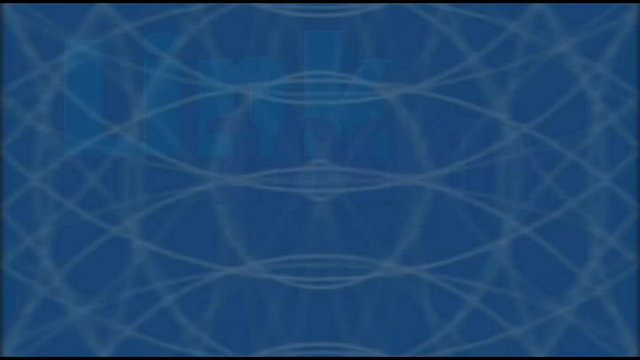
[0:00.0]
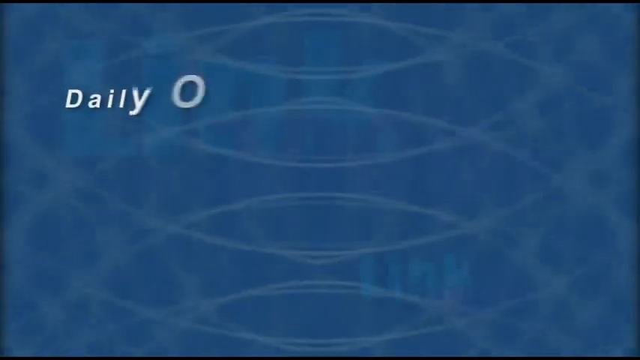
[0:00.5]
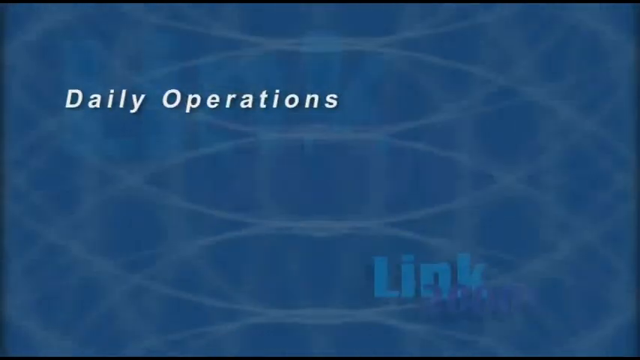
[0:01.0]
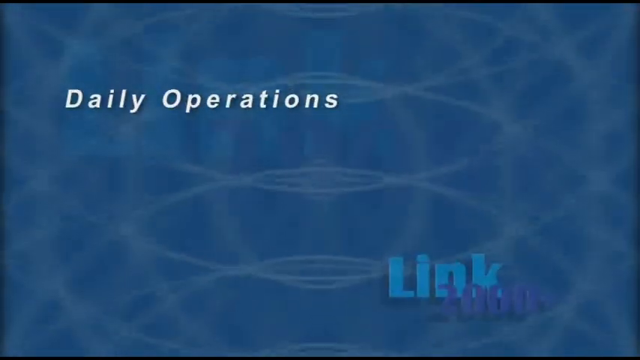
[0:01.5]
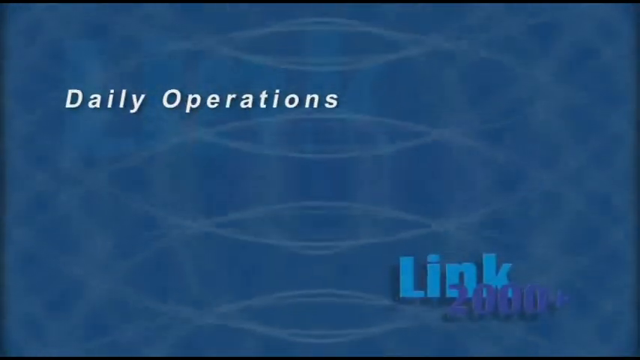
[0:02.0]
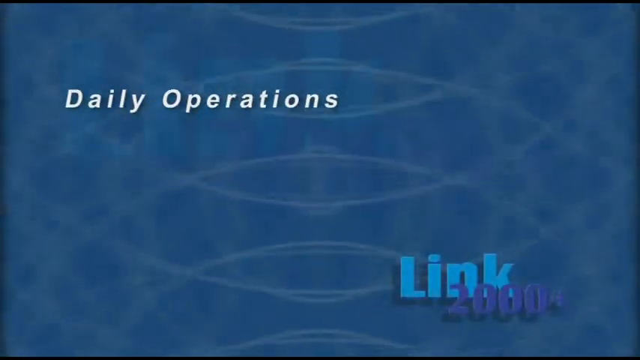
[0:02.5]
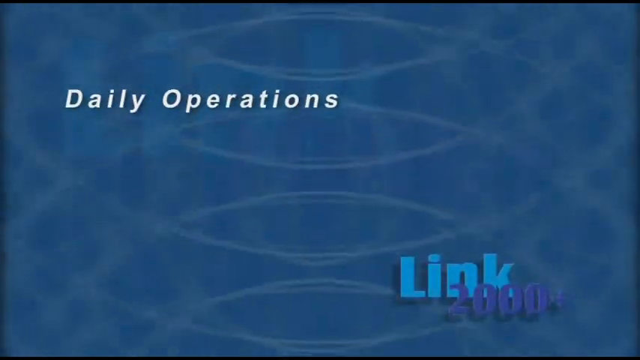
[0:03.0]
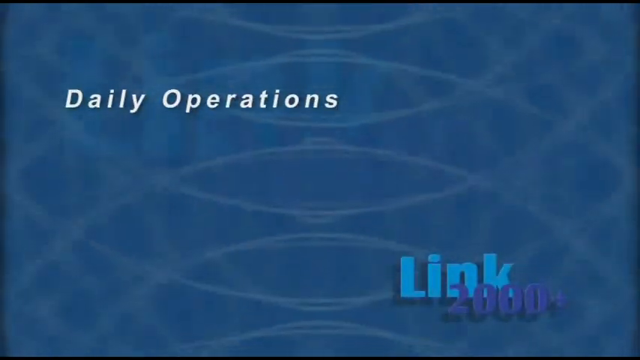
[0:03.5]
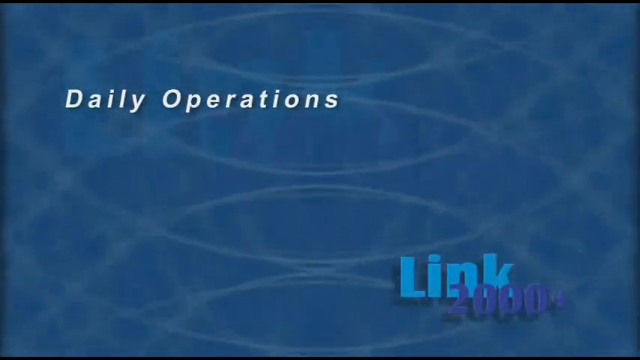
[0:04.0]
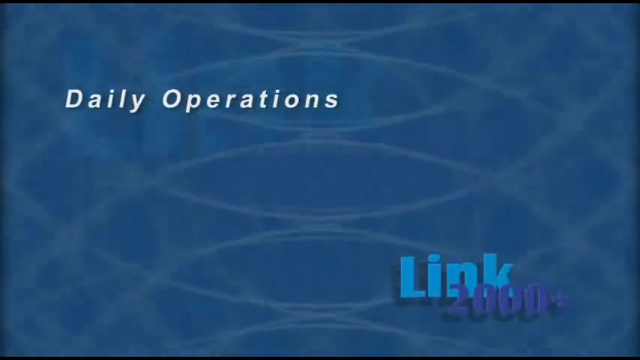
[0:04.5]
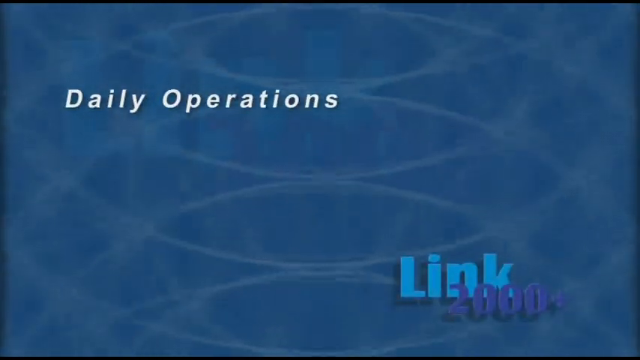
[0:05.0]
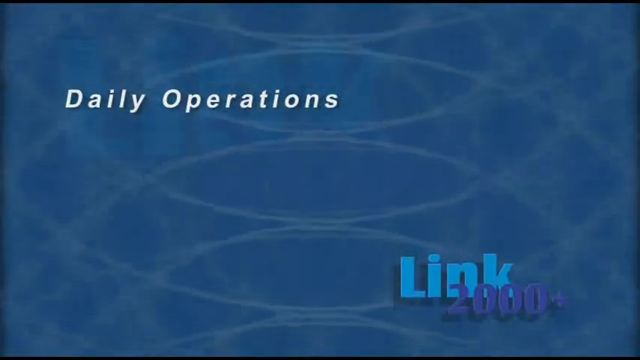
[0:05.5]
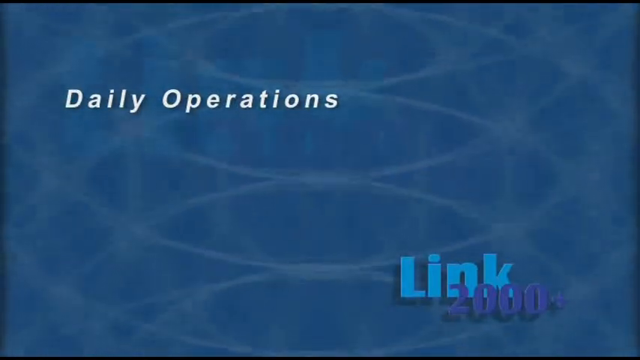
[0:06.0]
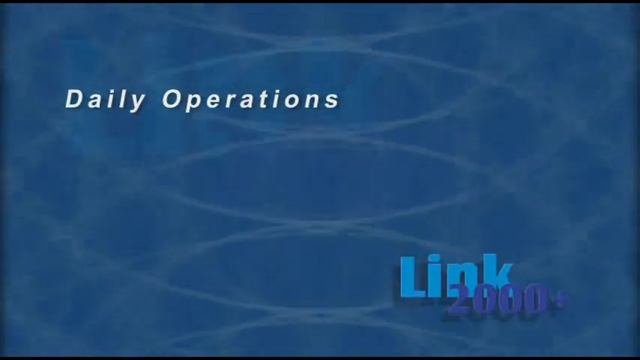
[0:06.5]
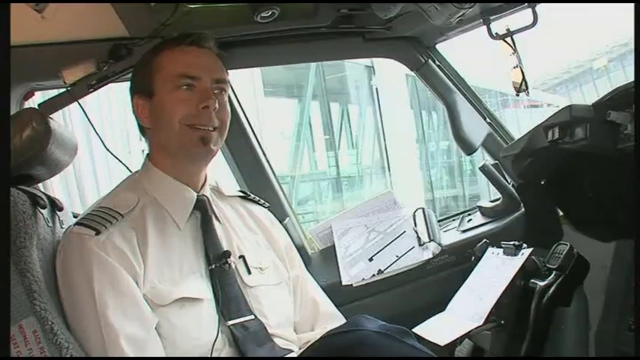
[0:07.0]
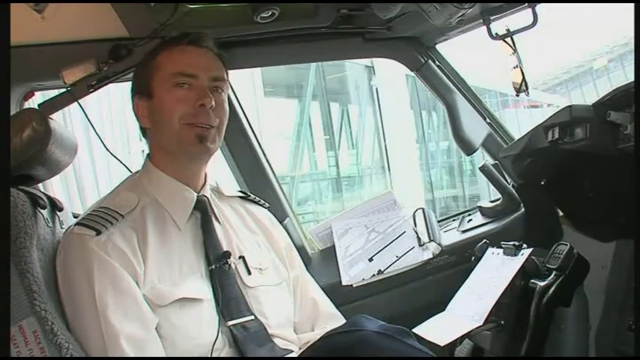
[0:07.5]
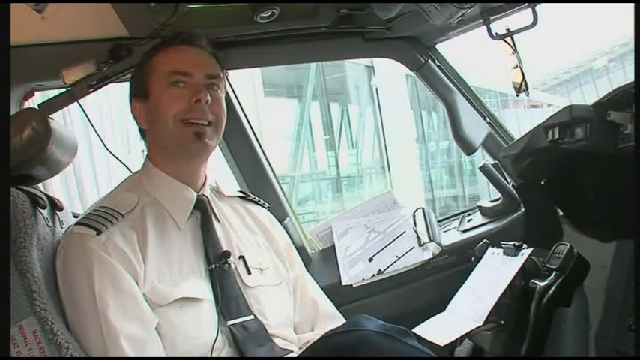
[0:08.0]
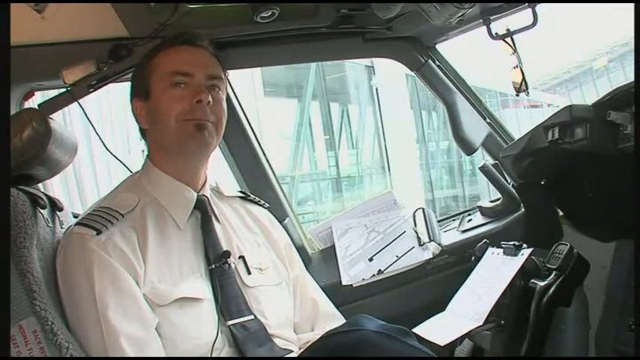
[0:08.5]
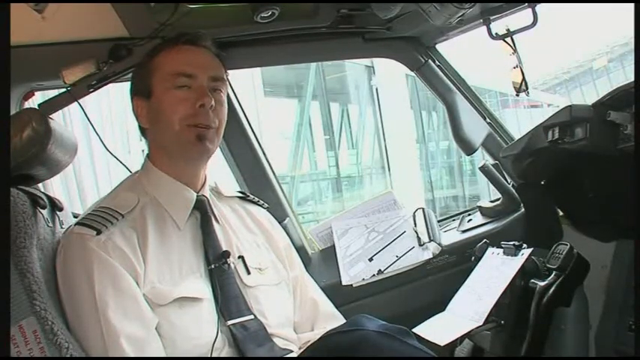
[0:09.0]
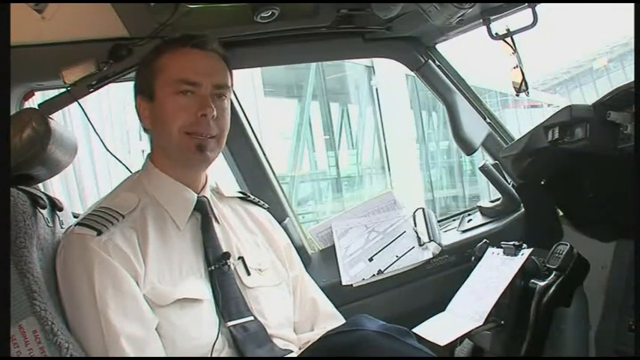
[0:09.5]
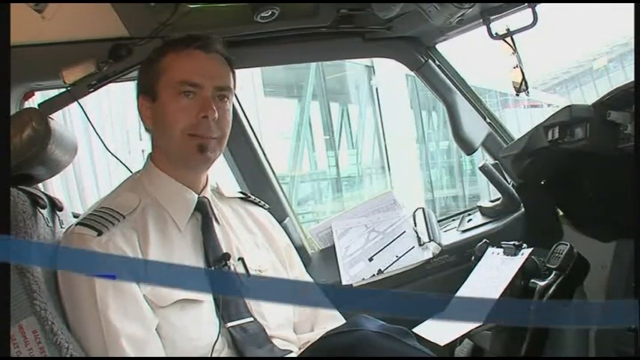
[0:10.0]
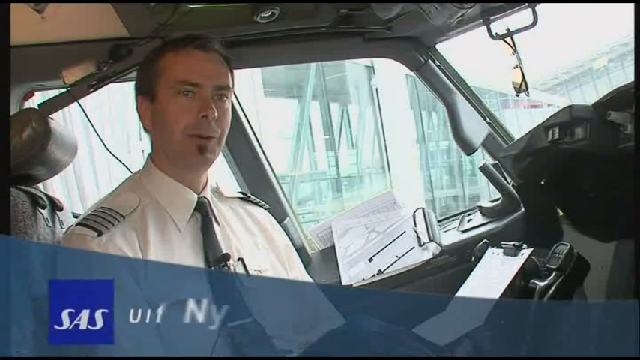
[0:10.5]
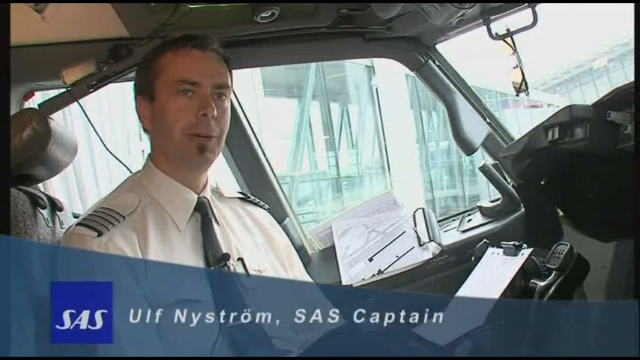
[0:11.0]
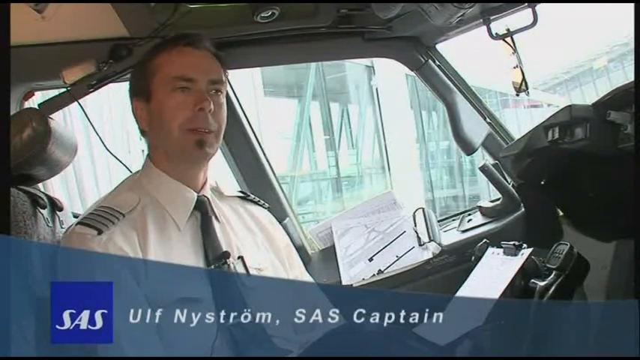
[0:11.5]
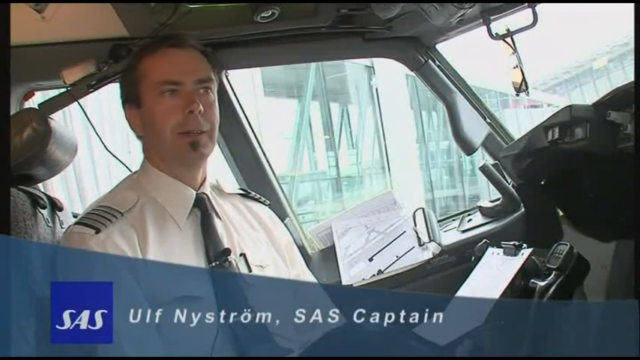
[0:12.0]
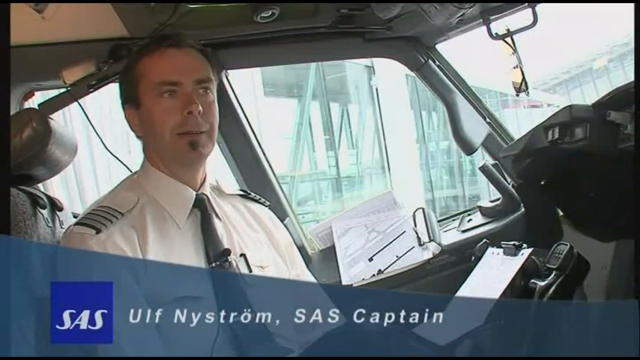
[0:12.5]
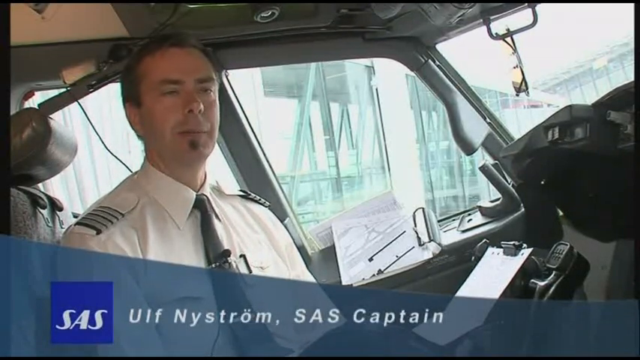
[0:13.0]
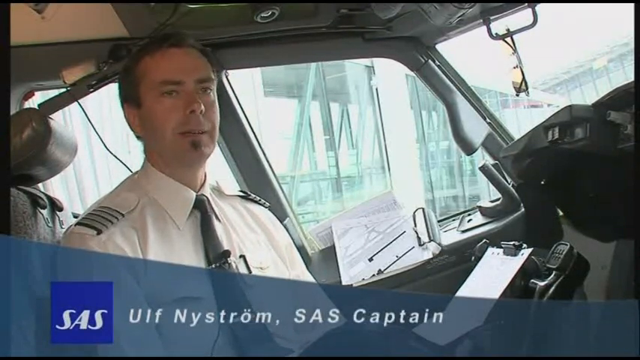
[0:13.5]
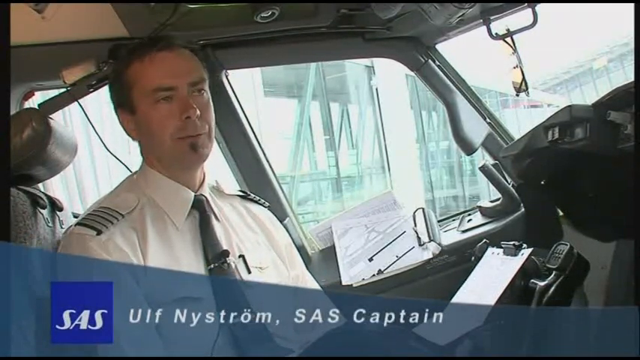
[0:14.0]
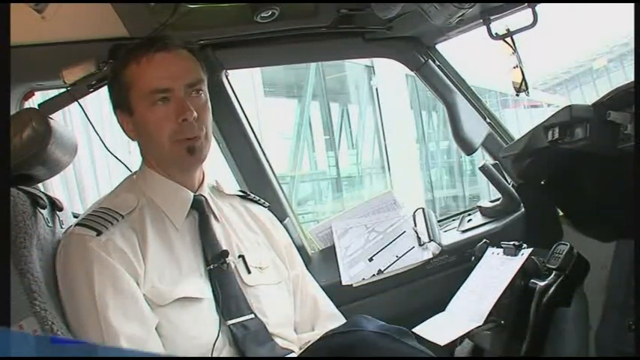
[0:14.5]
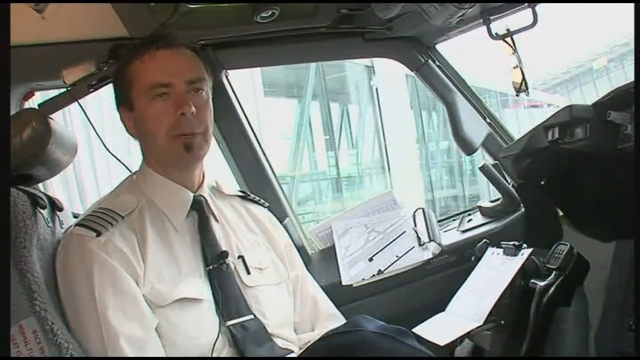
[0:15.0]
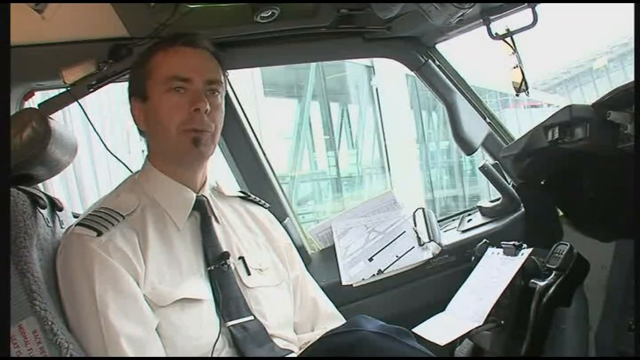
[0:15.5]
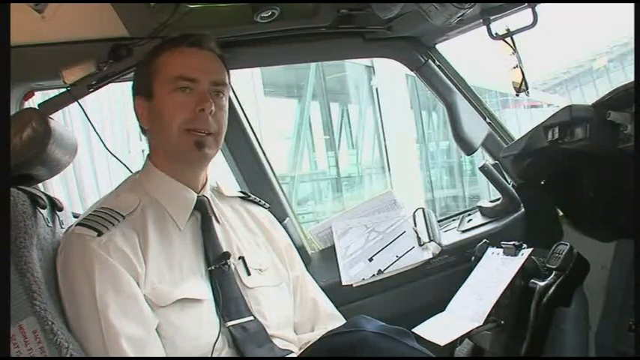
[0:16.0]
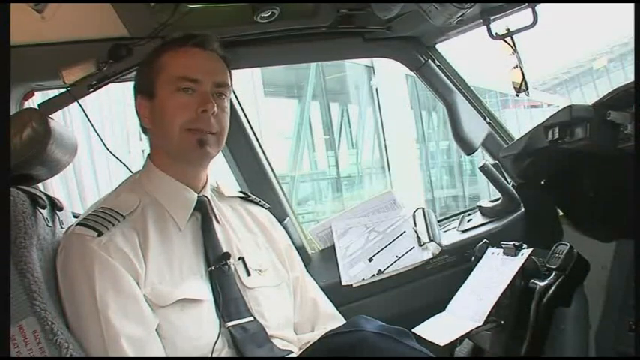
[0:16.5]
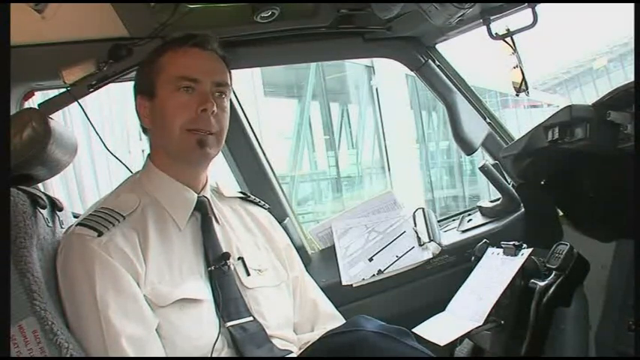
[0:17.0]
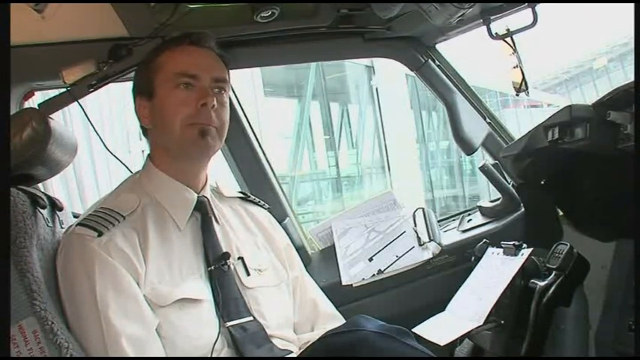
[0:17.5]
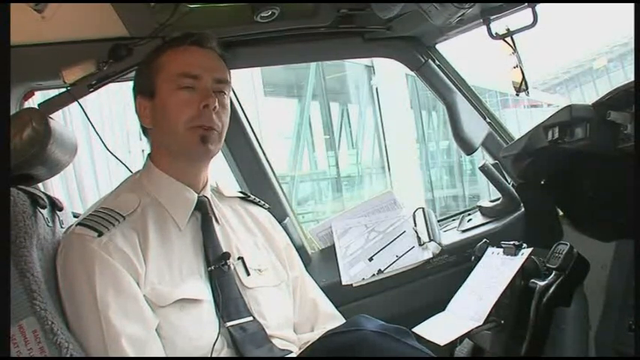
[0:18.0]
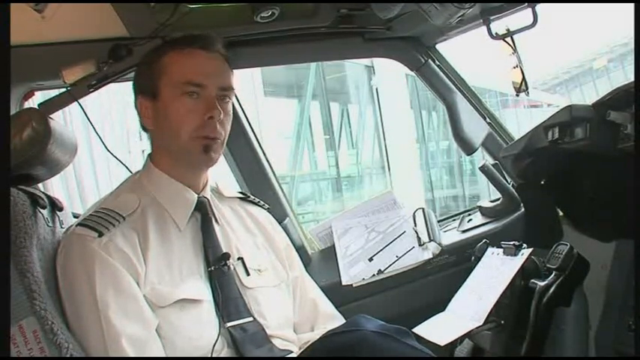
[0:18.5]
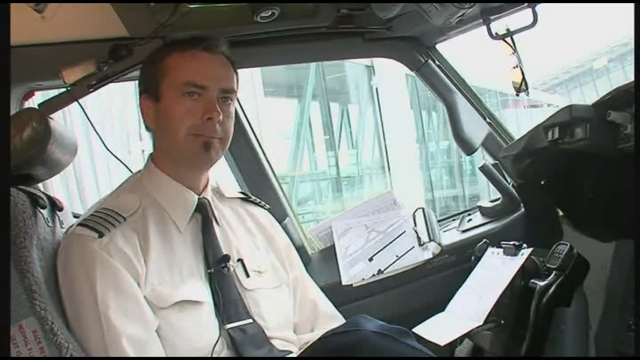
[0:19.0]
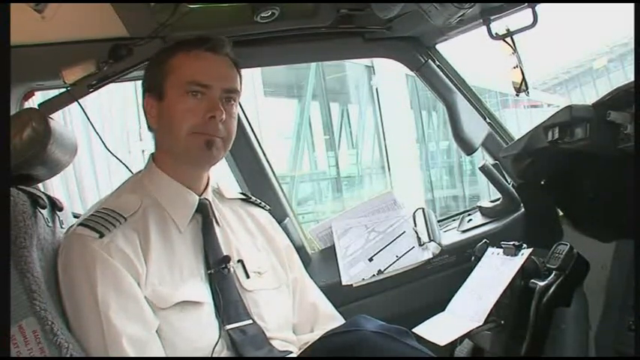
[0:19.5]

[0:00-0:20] This is a video from SAS. The opening credits show a background of what looks like ripples on water, with two lines of text: at the top it says "daily operations", and at the bottom right it says "link 2000", with "2000" in purple and written over "link". After the opening credits disappear, the video cuts to a sea captain in what looks like an engine room or captain's quarters. He wears a captain suit and tie and has a clipboard in front of him. He looks like he is in his 30s, a white male with a goatee. He is being interviewed, and his name shows up as "Ulf Nistrom"; he is an SAS captain. He talks very slowly in a one-on-one interview, and toward the end there is a very short close-up of his face.